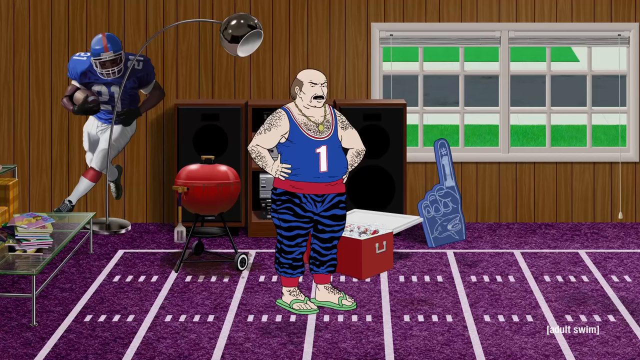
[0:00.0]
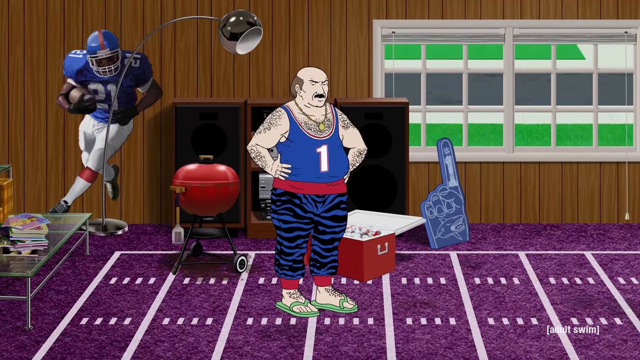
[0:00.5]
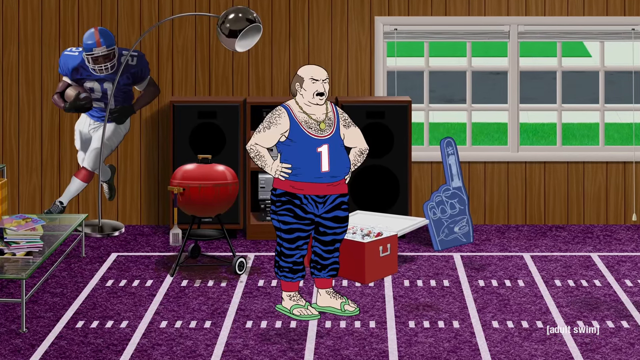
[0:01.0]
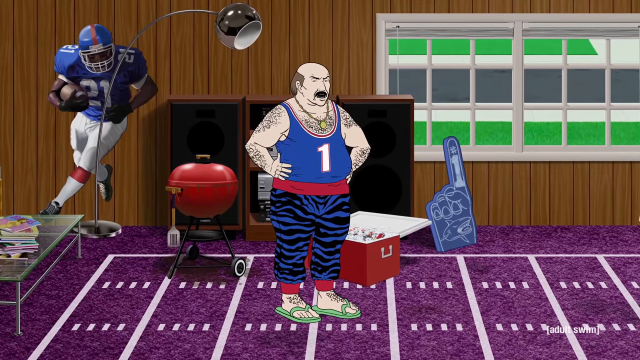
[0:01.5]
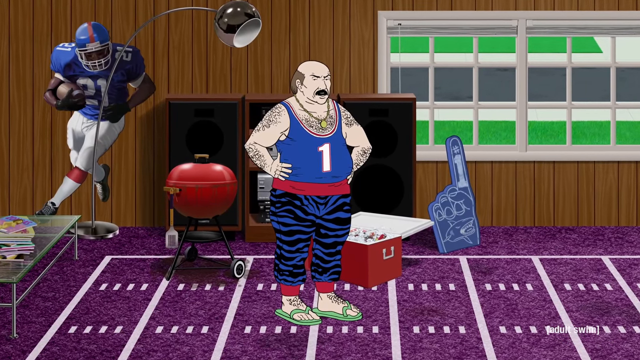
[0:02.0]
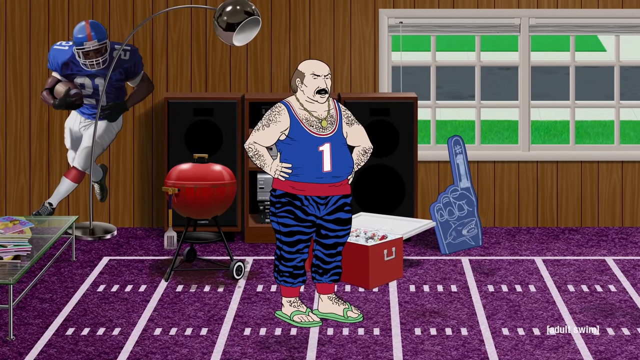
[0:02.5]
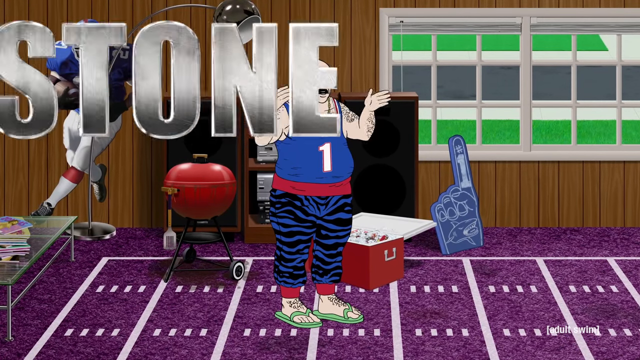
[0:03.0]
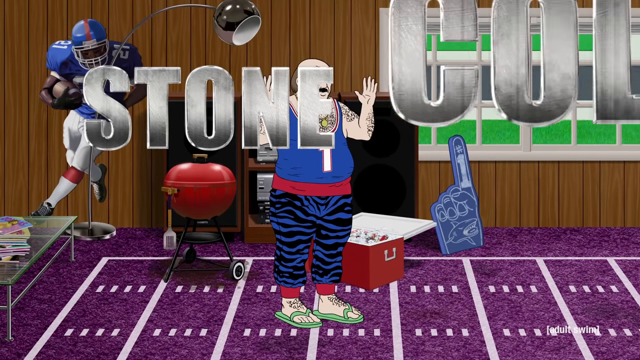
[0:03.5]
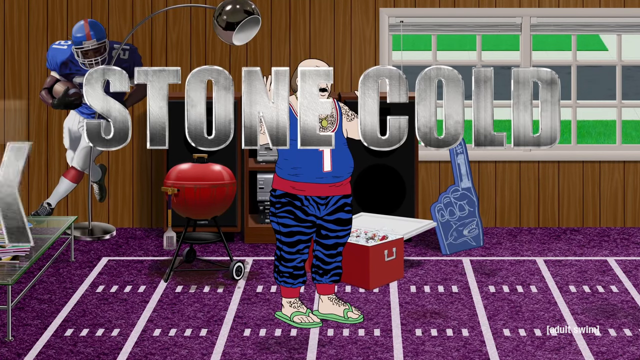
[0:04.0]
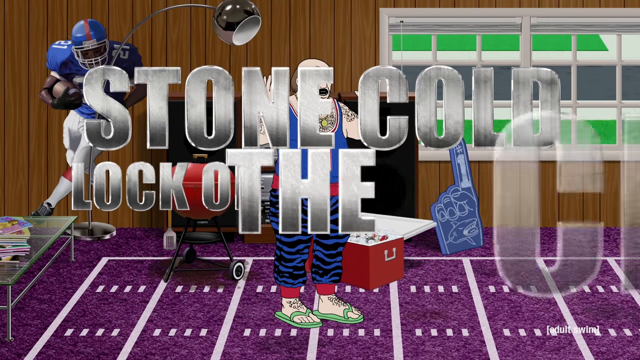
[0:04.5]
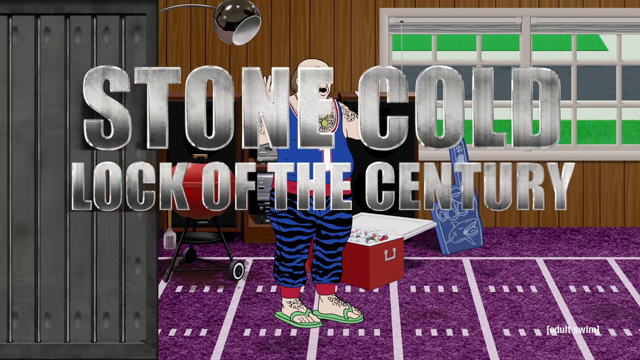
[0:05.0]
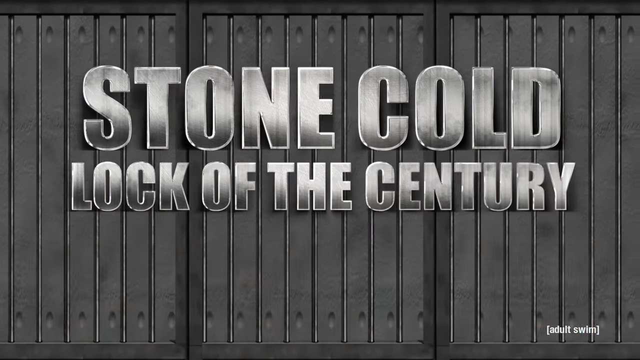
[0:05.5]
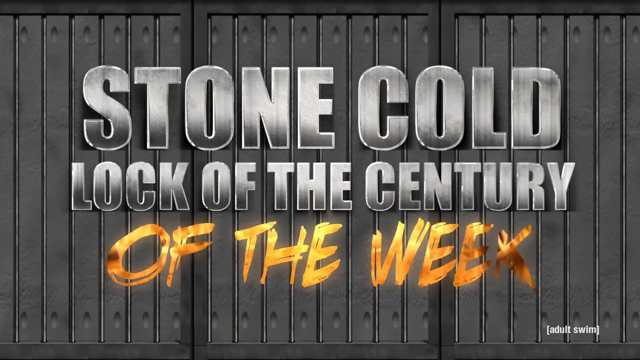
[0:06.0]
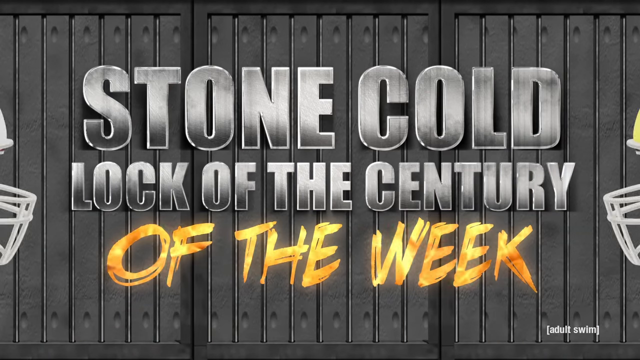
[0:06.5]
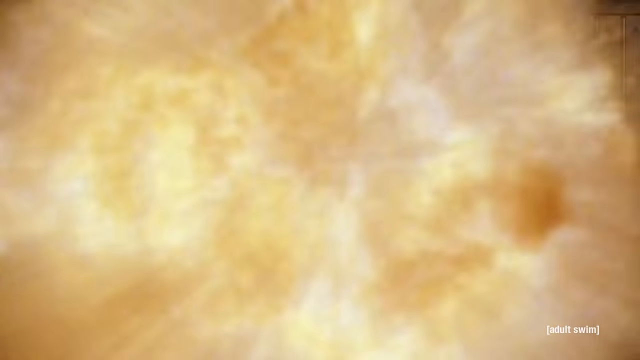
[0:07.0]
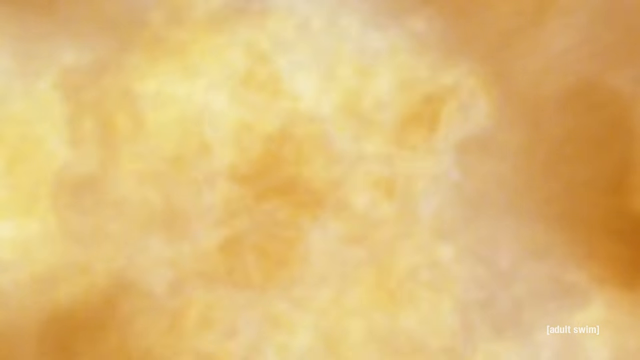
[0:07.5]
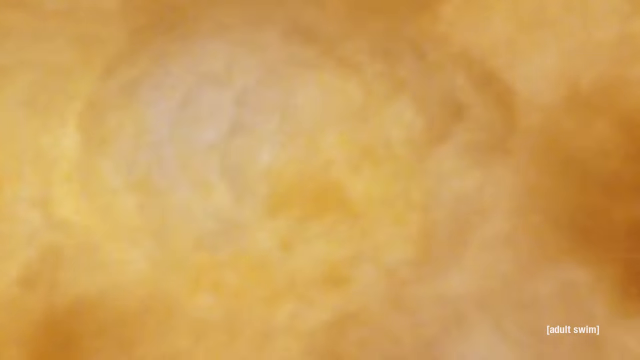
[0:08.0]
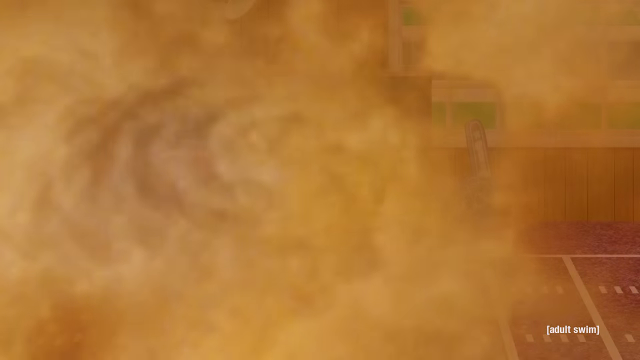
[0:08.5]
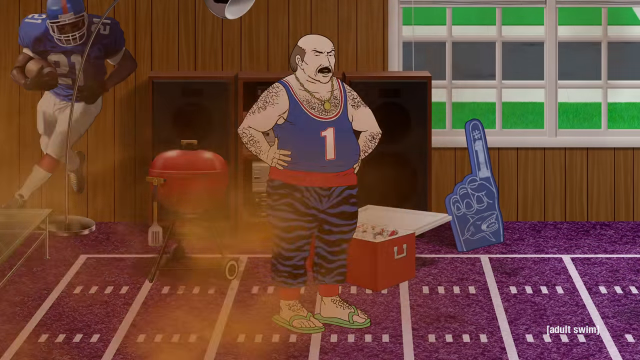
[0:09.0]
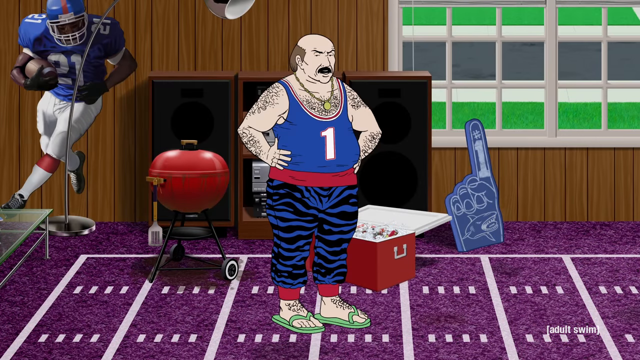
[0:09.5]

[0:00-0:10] At the center, a man with a mustache stands with his hands on his hip. He wears a blue and red striped top with the number one on it that matches his pants. On his left is another character dressed in what appears to be an American football uniform with a helmet, seemingly a player. A blue hand can be seen, and there is a red cooler box that is open next to it. A braai stand is behind the man, and behind him there is also a cabinet that consists of three divisions. On the far end there is a long lamp and a glass table with something that appears to be books on it. Then an image of a card appears with "STONE COLD, LOCK OF THE CENTURY" written on it in small metallic letters. The background is dark with a metallic surface, and finally a wave of what appears to be fire comes across. The video is sport related.